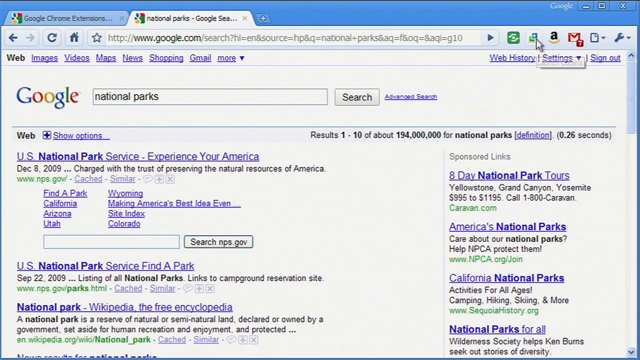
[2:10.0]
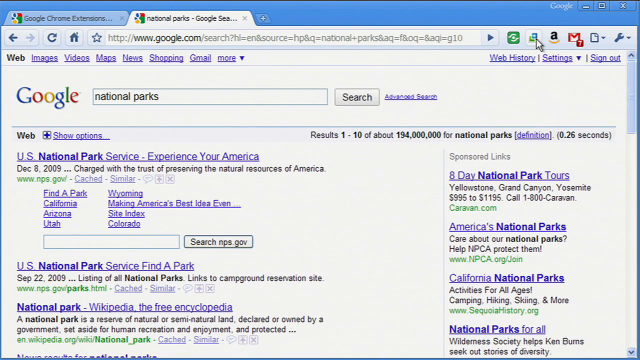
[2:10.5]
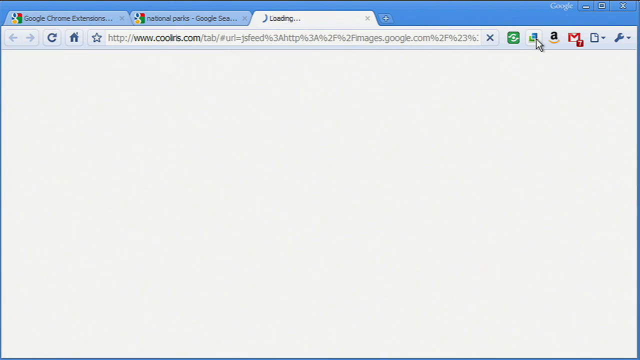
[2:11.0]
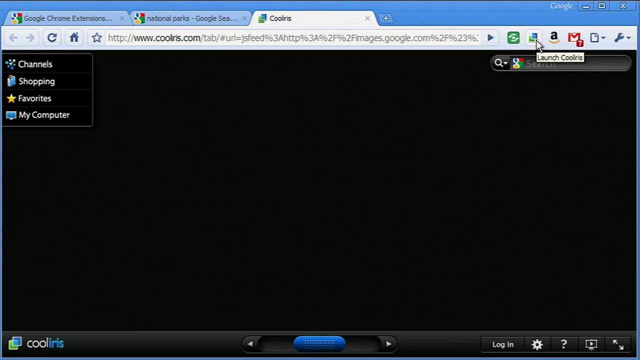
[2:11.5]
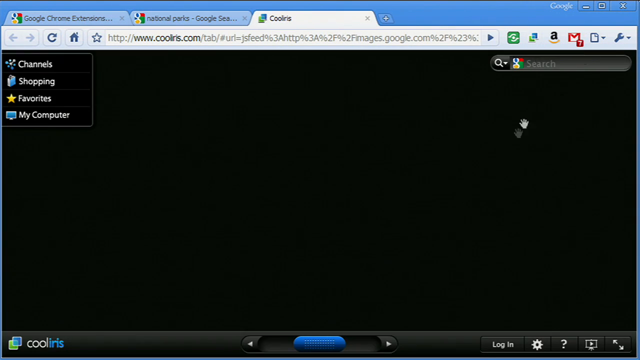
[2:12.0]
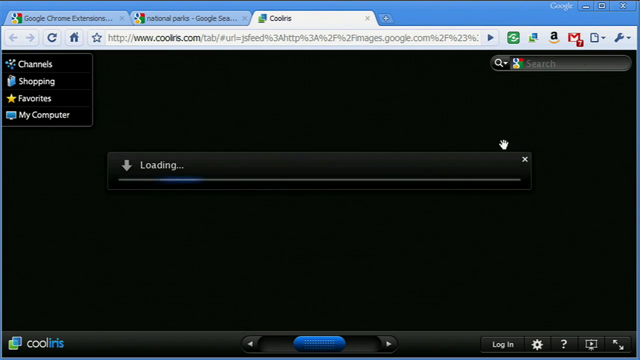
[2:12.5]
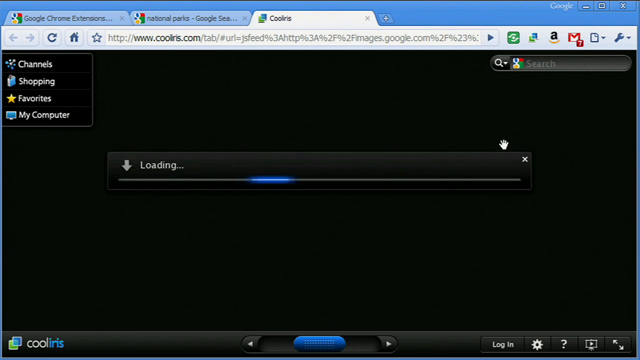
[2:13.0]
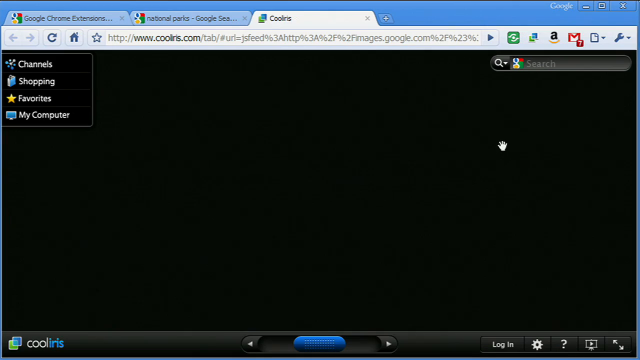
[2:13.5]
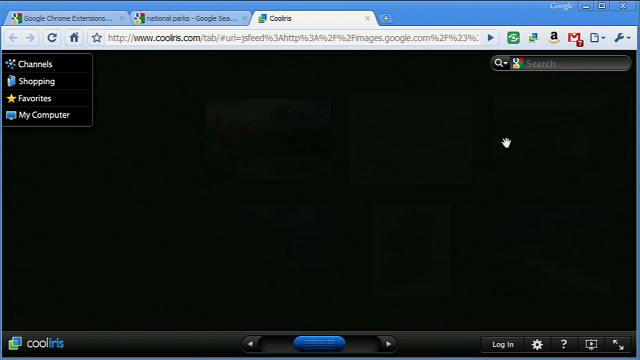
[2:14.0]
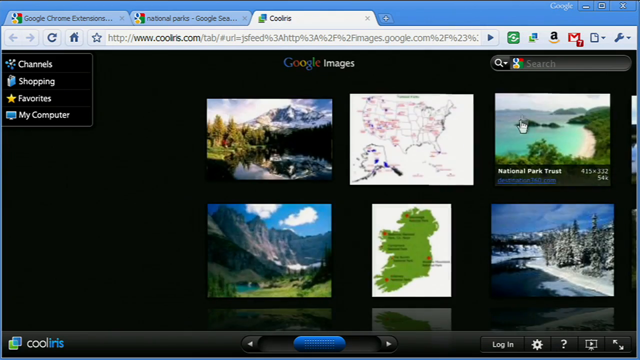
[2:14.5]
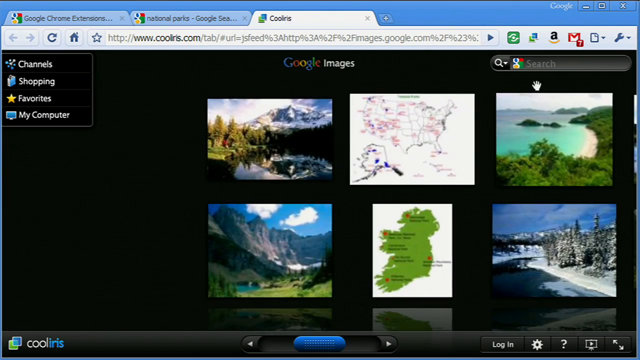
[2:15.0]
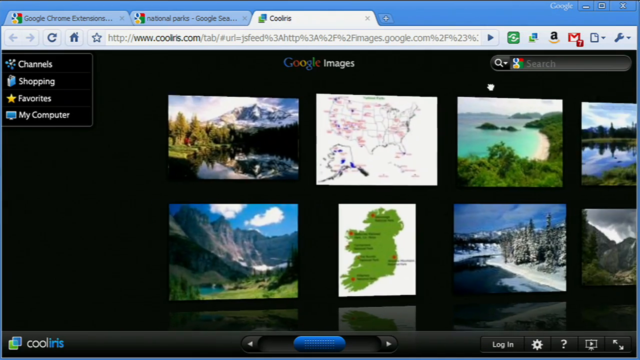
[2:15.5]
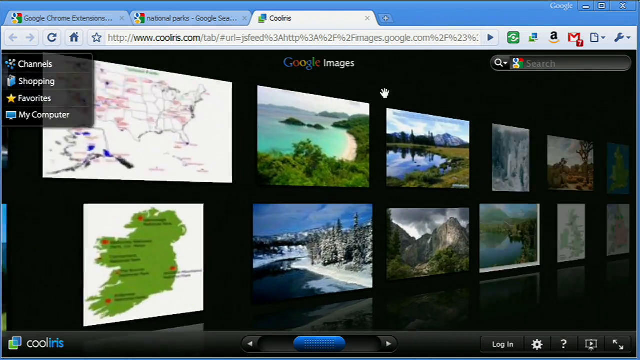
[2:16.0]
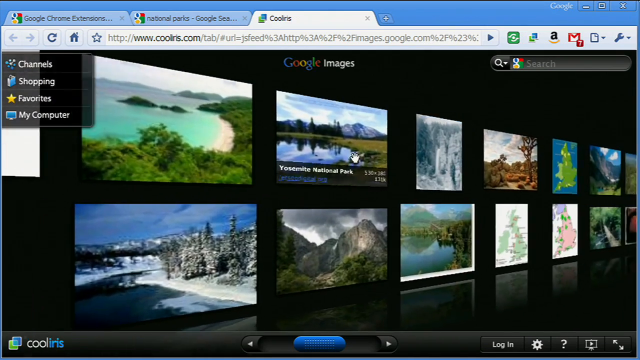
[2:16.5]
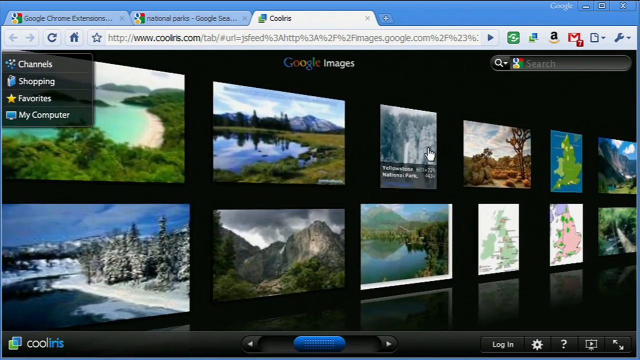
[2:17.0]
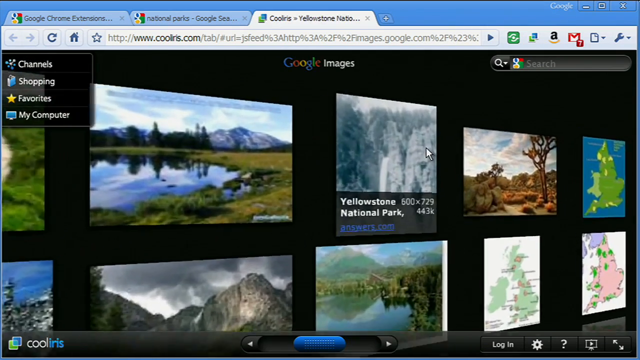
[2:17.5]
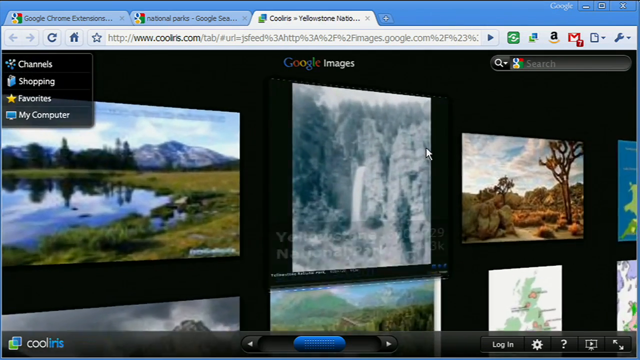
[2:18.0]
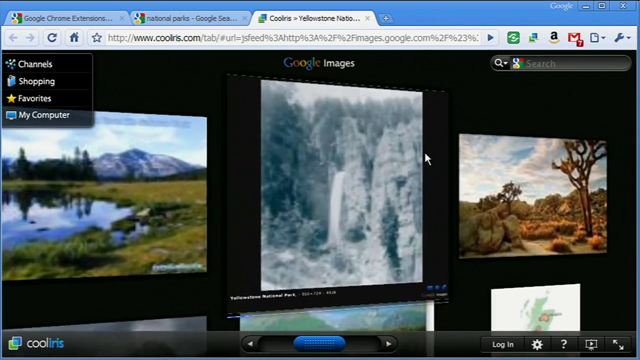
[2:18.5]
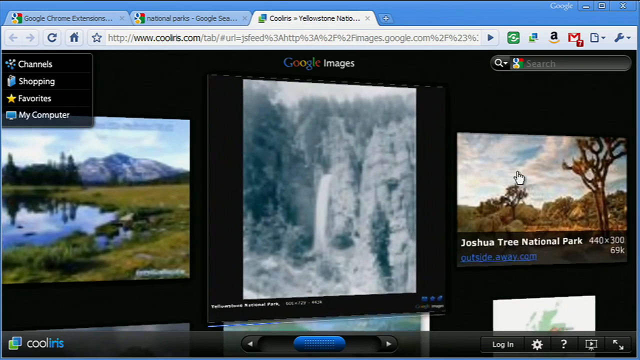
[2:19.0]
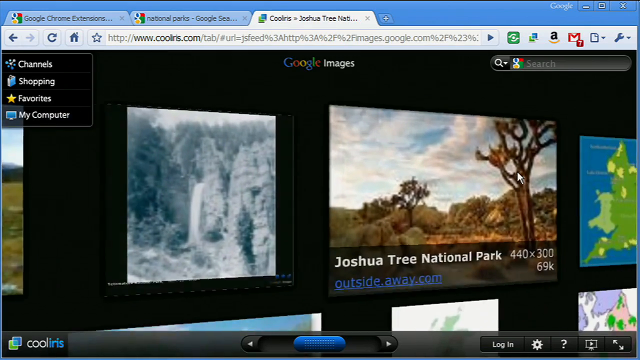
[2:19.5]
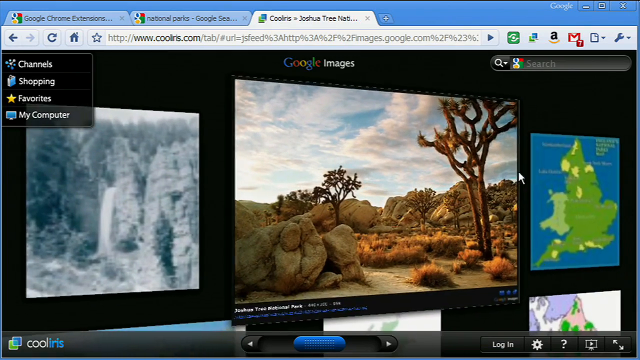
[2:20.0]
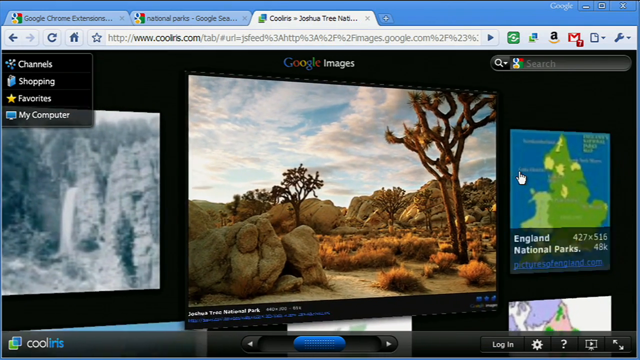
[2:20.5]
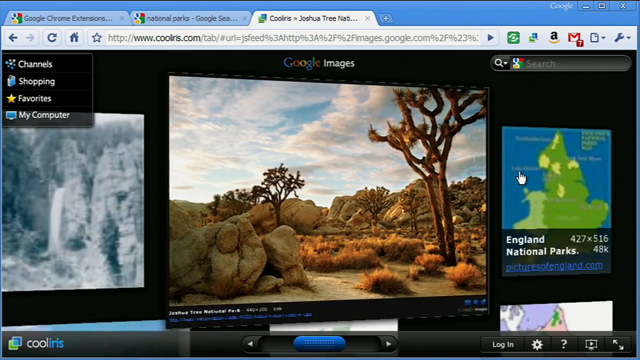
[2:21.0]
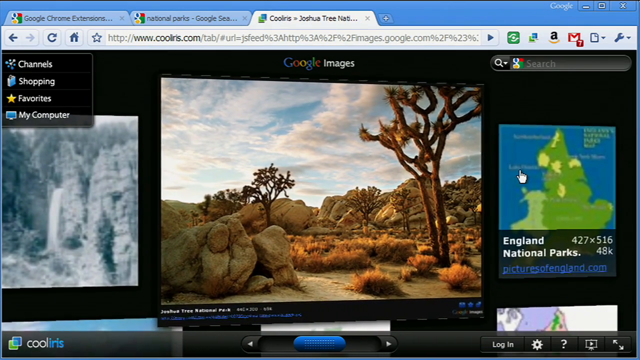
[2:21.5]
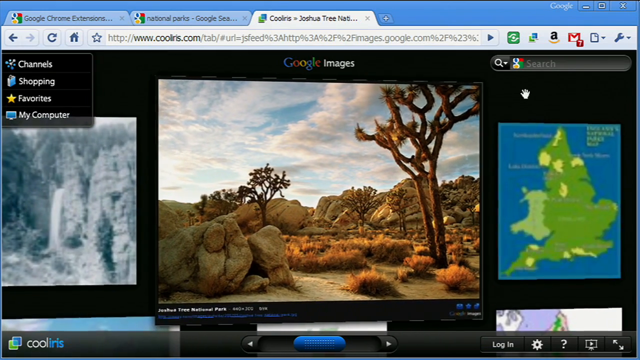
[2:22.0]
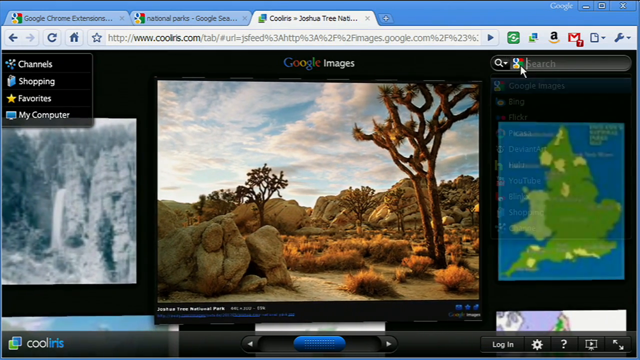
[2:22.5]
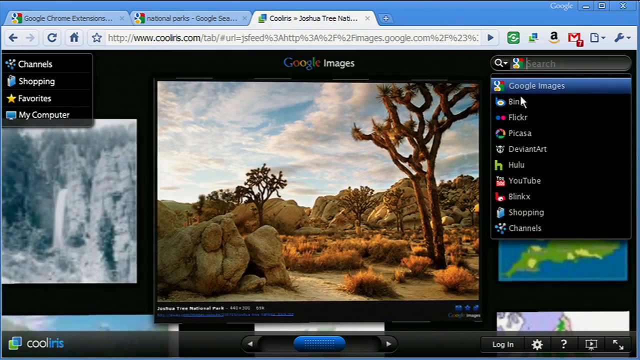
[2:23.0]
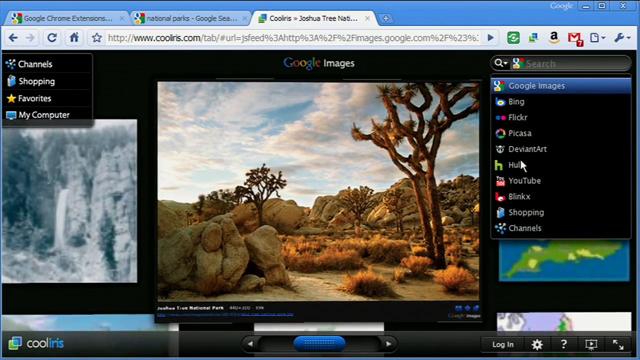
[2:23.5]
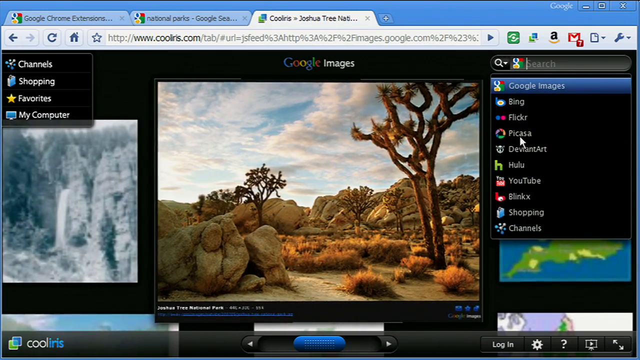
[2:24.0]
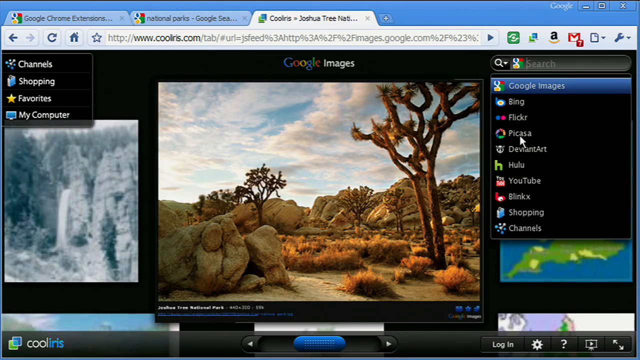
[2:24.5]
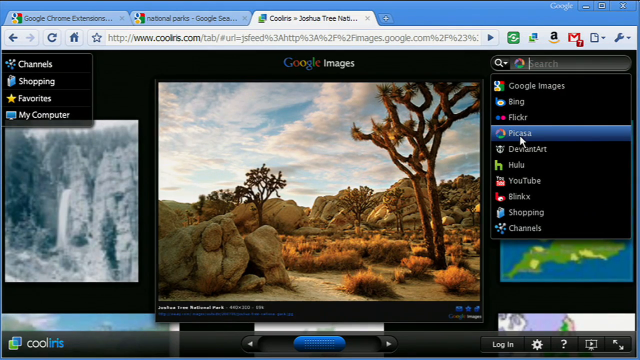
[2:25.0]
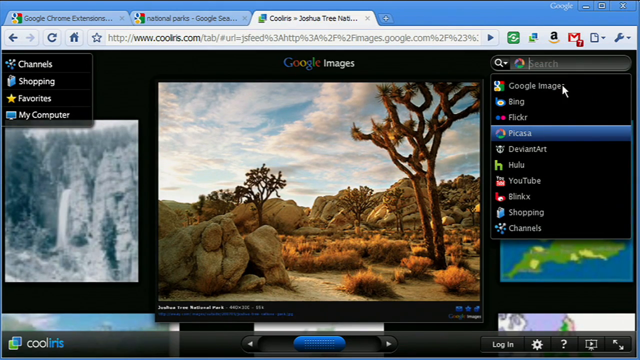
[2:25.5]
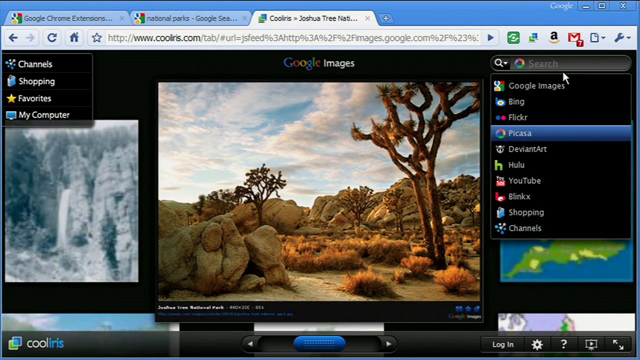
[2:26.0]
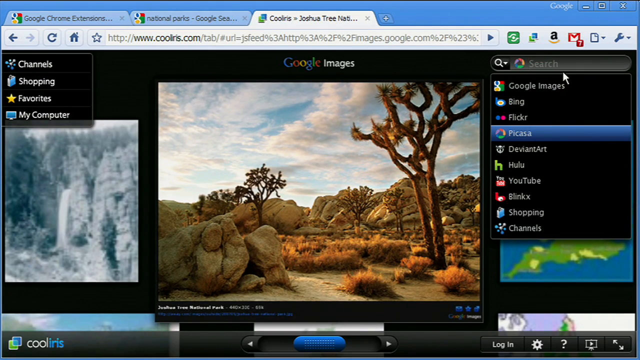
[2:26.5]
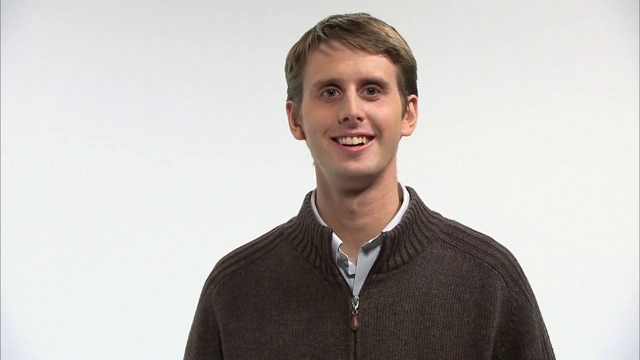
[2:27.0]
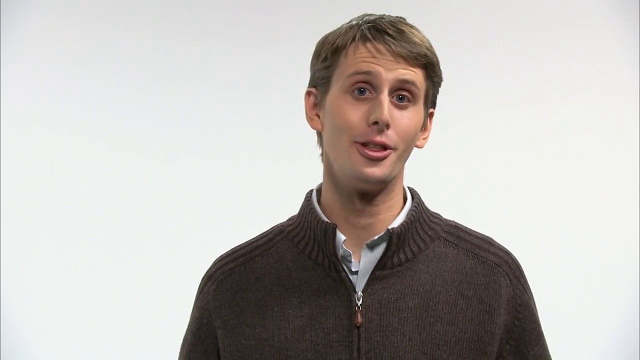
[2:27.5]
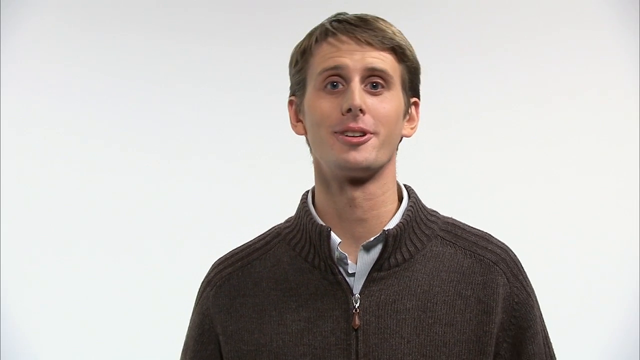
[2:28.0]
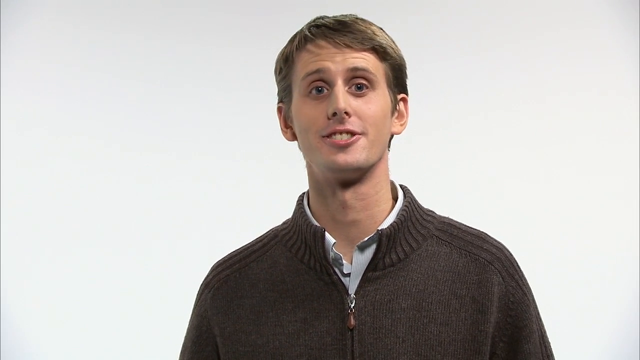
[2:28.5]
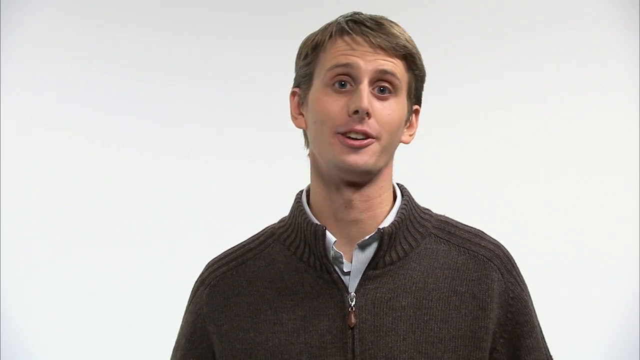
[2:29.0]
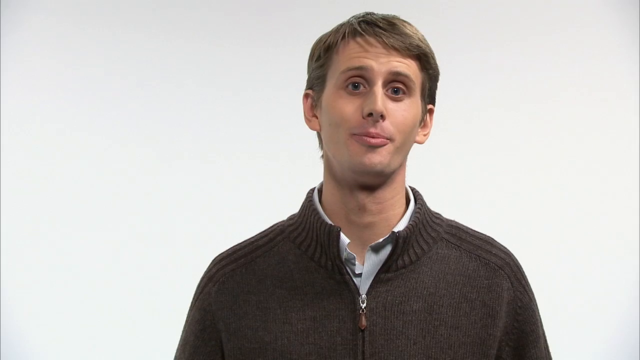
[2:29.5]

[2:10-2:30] A google.com search results page shows the search national parks, with the typed search in the Google search bar at the top. The first result is "US National Park Service. Experience your America" and the second is "US National Park Service. Find a park." Somebody clicks an extension in the upper right corner, and the screen turns black. On the left side is a box that says "channel", "shopping", "favorites", and "my computer", each with an icon in front. In the center there appears to be a large horizontal rectangular box that says "loading" with a down arrow in front of the text, and a black bar with a blue loading symbol kind of moving forward through it. A cursor is on the right side of the screen. Suddenly images of nature appear on a Google Images page: a mountain in the back, rivers, and something like an icy tundra with trees and mountains. The mouse cursor moves the images around and slides through them, then clicks an image of Yellowstone National Park and then an image of England National Parks. The cursor goes up to a Google search bar and clicks an icon for Picasa. A man then talks to the screen, moving his head around while keeping his eyes very wide open.